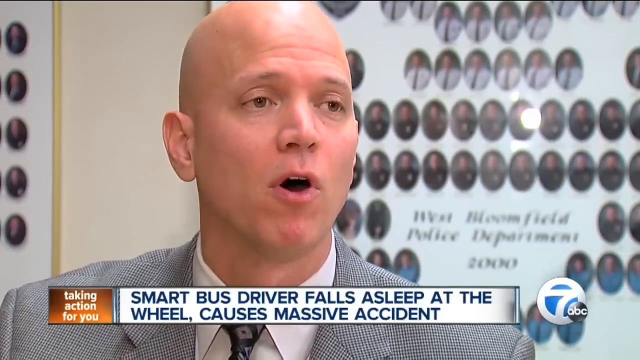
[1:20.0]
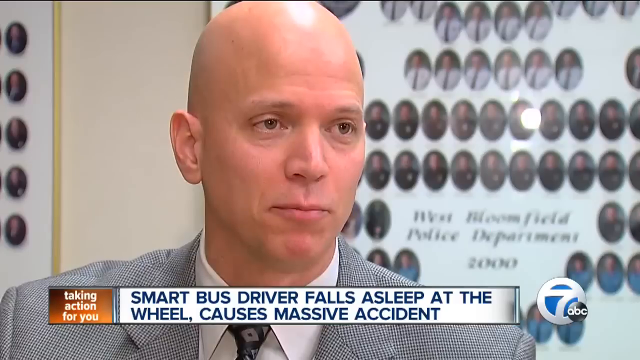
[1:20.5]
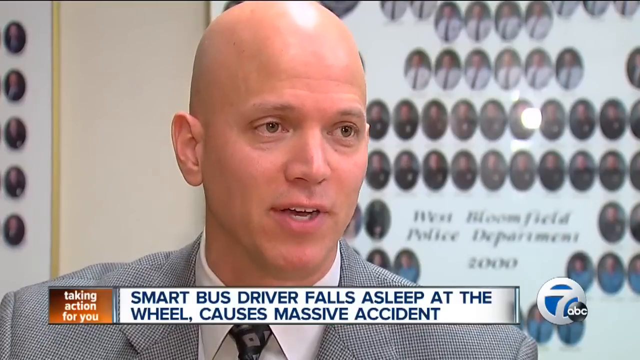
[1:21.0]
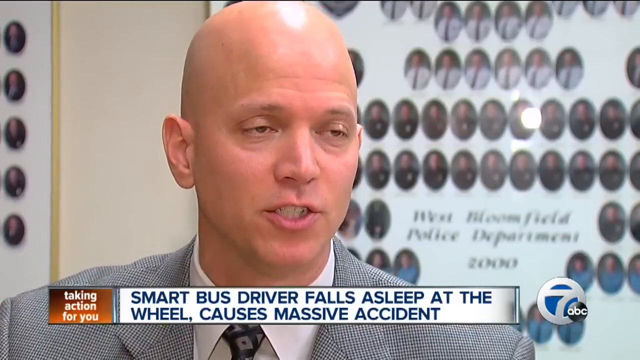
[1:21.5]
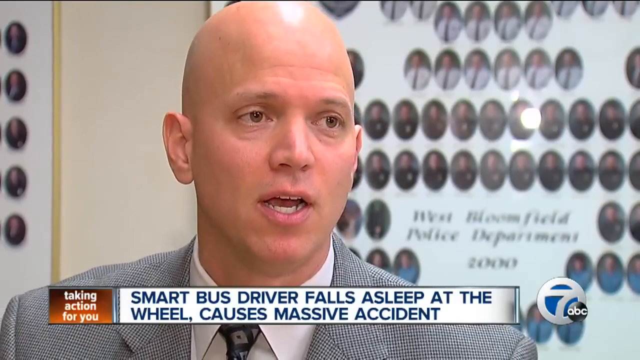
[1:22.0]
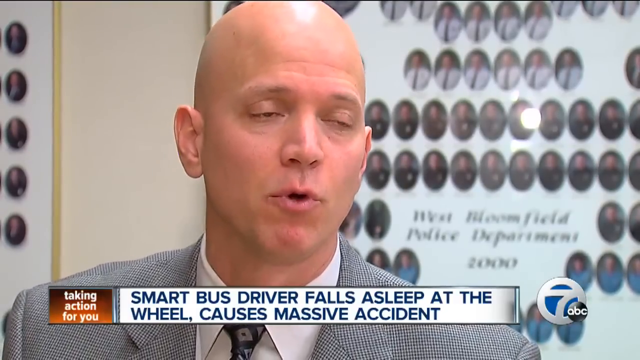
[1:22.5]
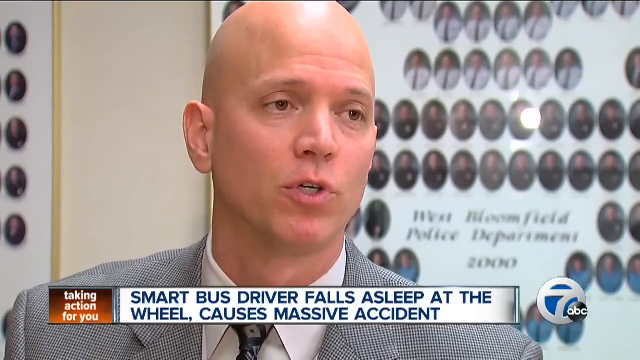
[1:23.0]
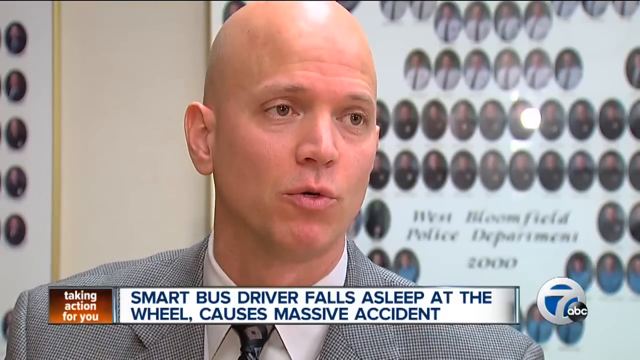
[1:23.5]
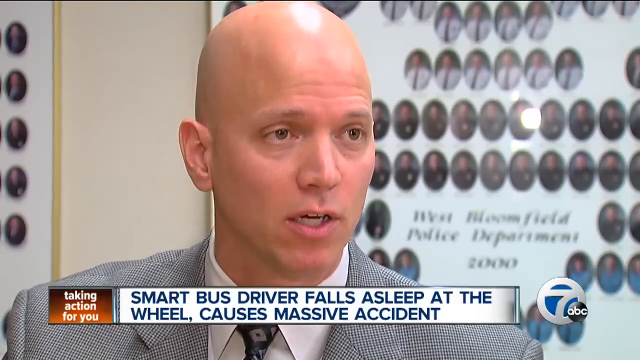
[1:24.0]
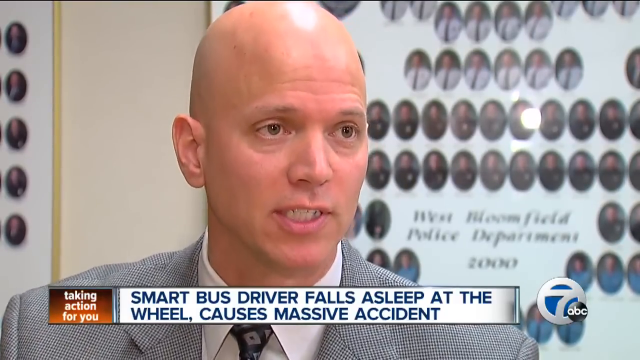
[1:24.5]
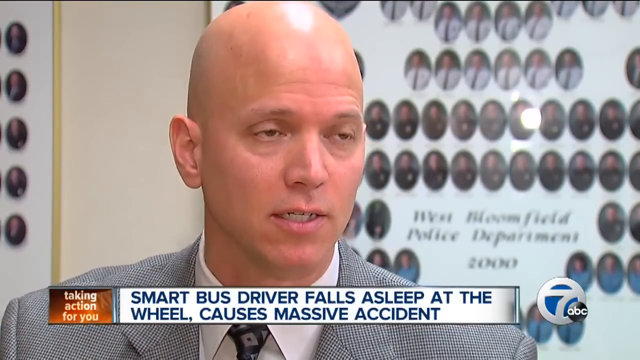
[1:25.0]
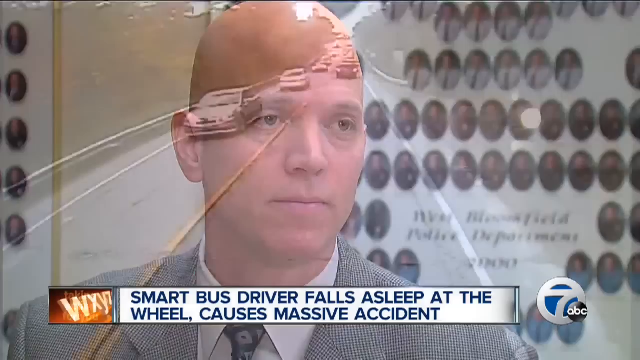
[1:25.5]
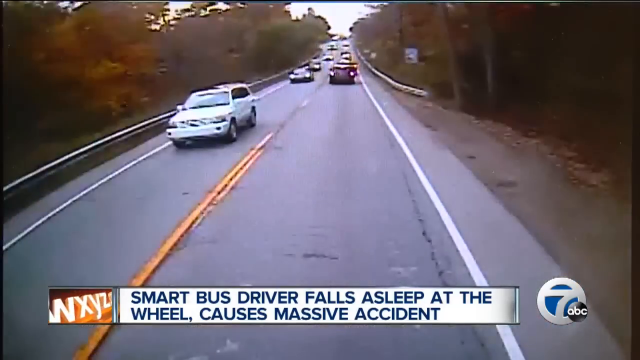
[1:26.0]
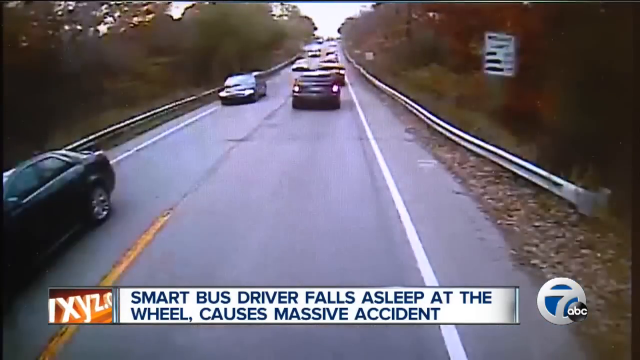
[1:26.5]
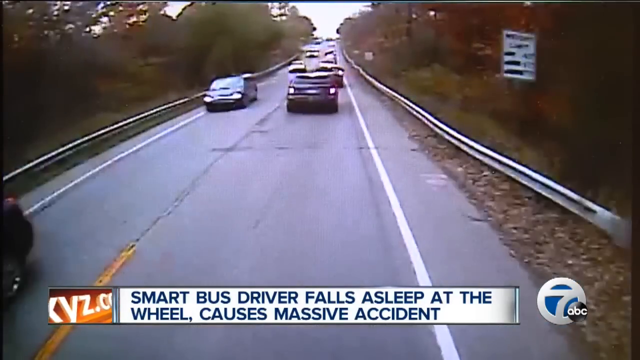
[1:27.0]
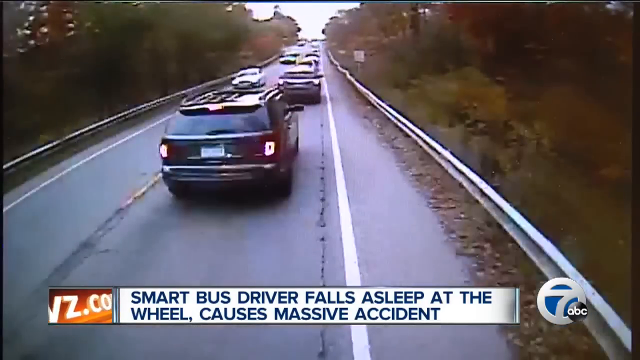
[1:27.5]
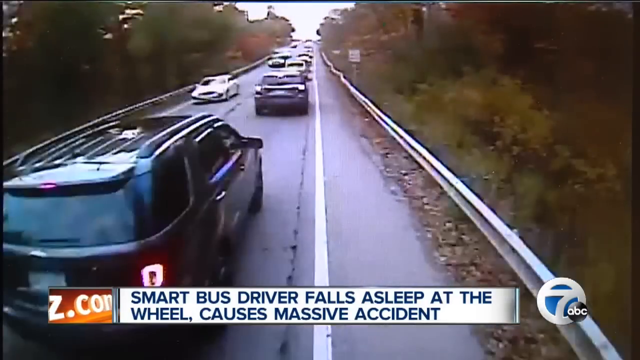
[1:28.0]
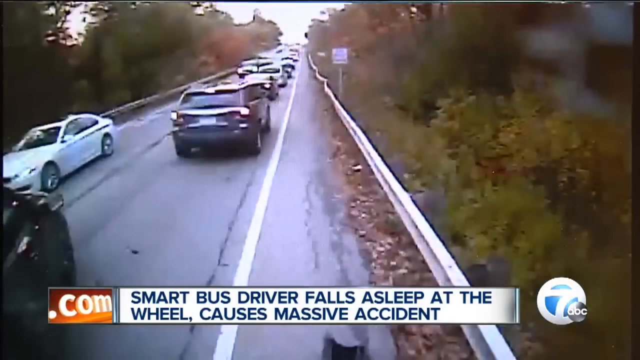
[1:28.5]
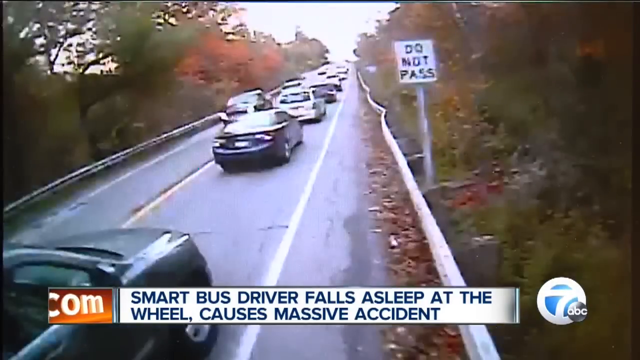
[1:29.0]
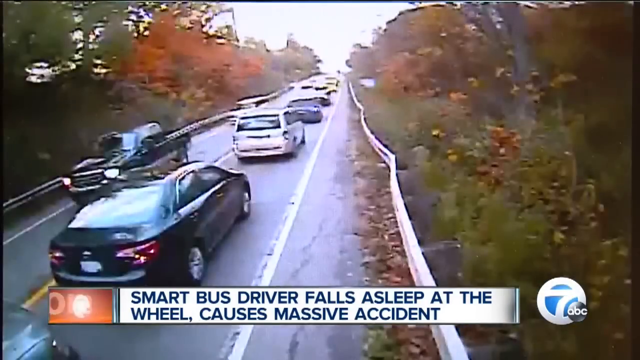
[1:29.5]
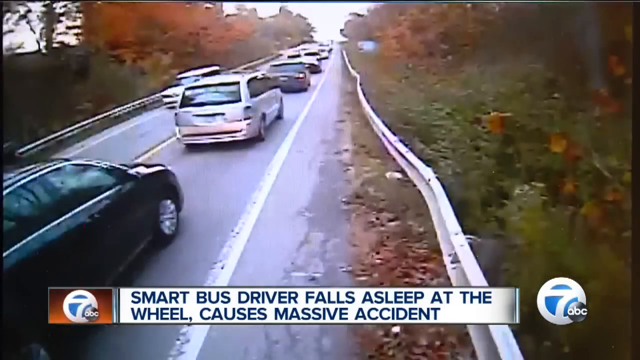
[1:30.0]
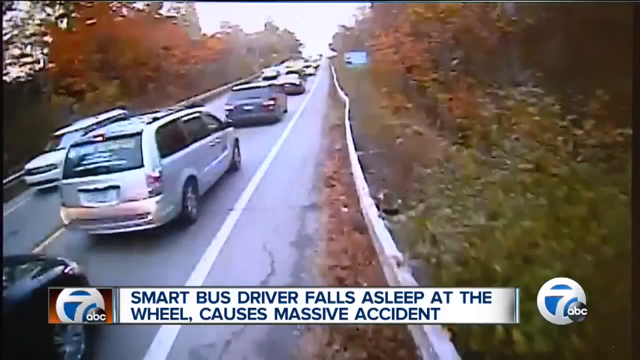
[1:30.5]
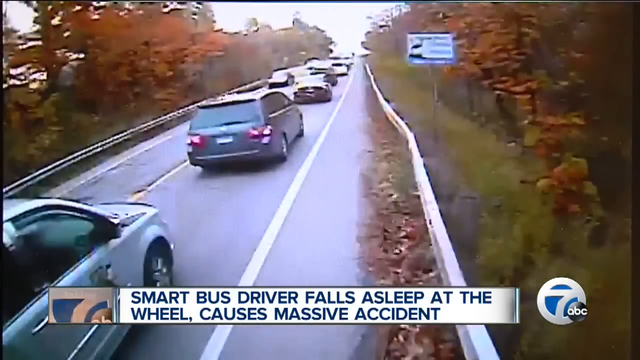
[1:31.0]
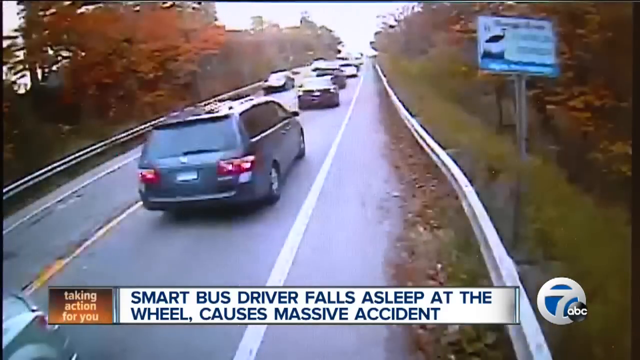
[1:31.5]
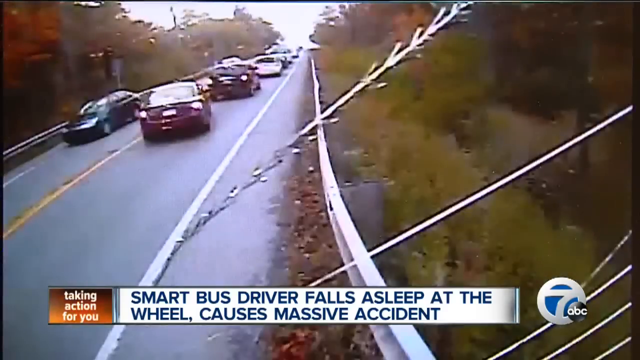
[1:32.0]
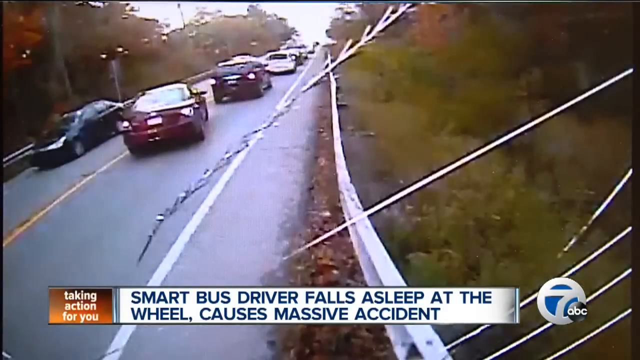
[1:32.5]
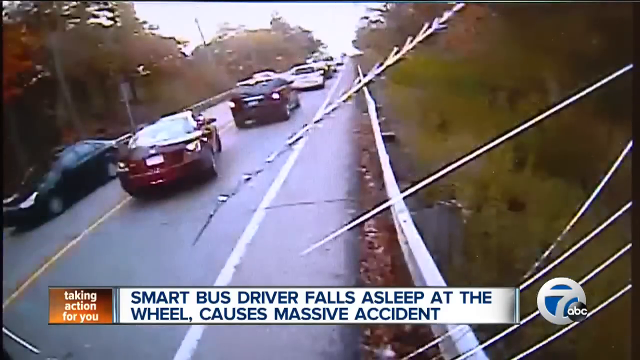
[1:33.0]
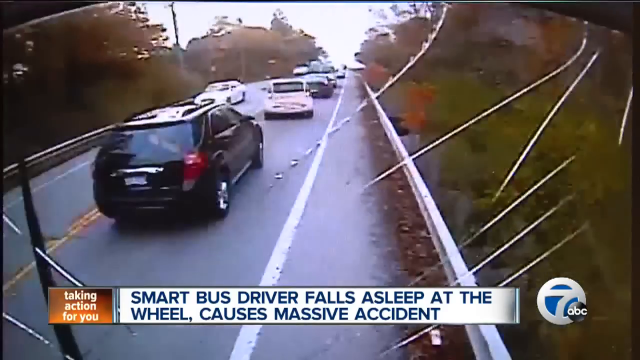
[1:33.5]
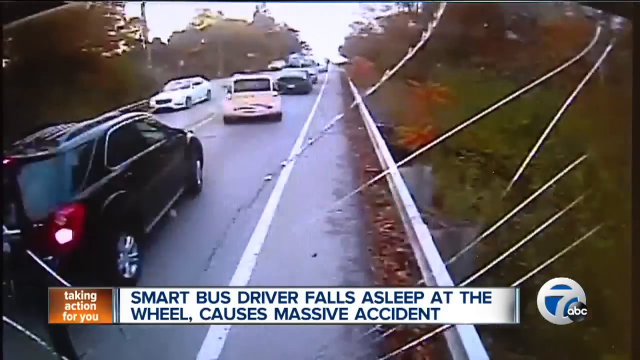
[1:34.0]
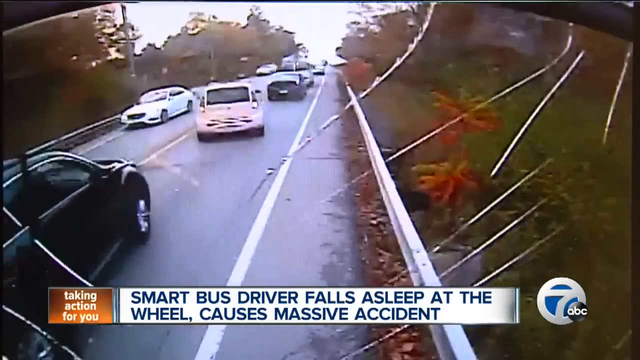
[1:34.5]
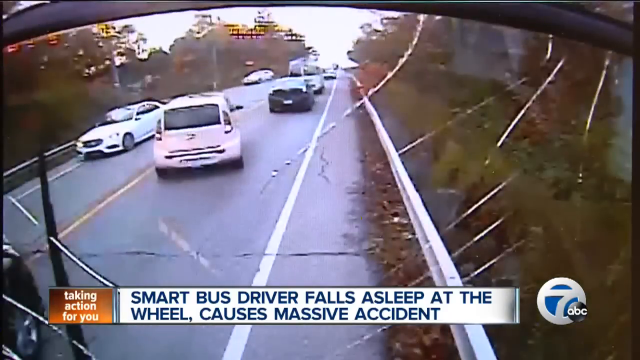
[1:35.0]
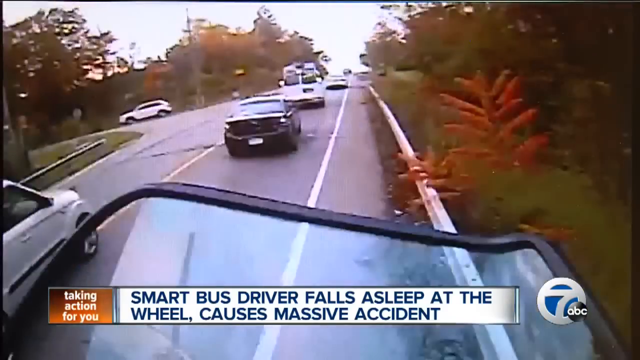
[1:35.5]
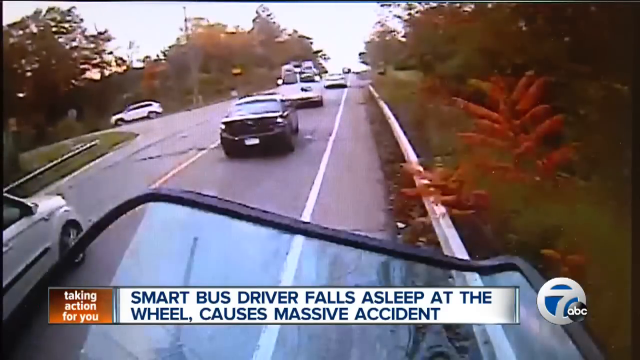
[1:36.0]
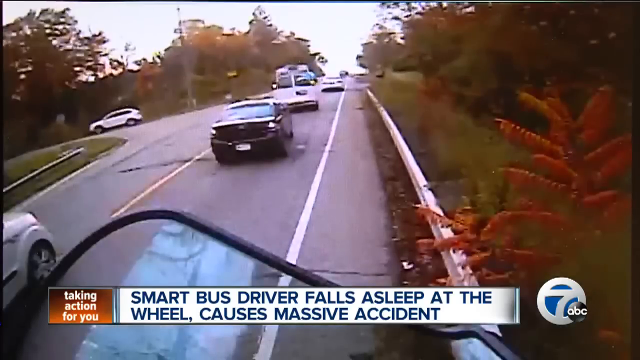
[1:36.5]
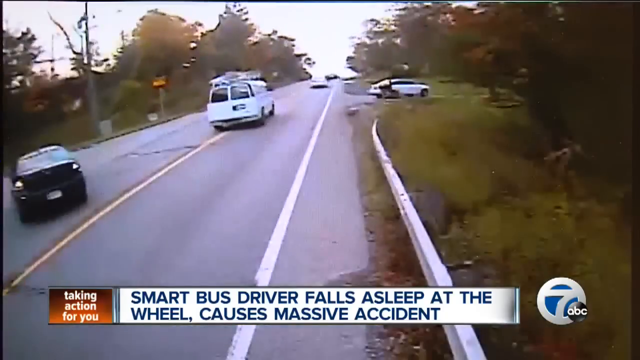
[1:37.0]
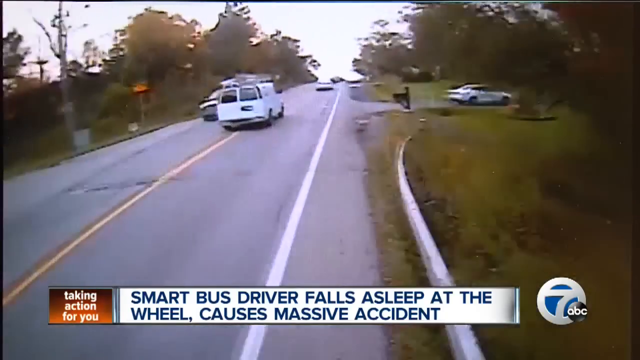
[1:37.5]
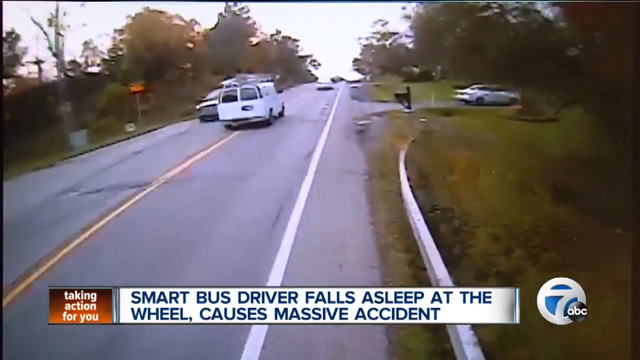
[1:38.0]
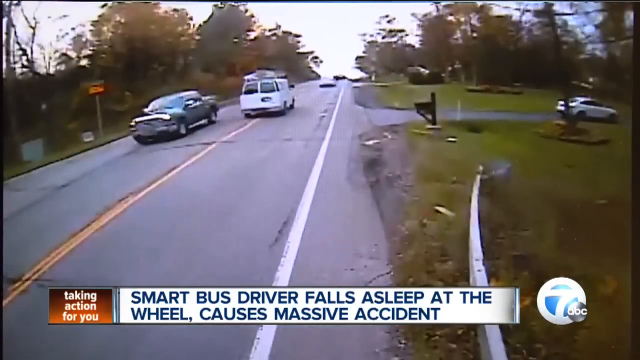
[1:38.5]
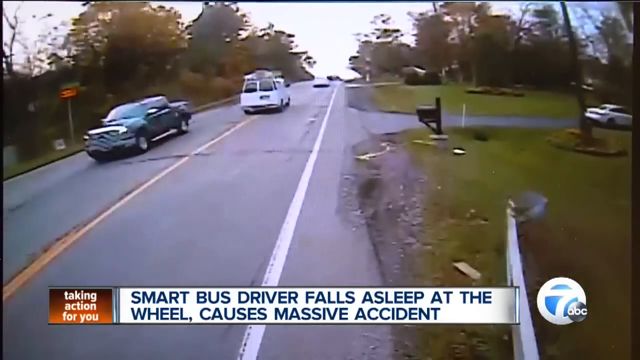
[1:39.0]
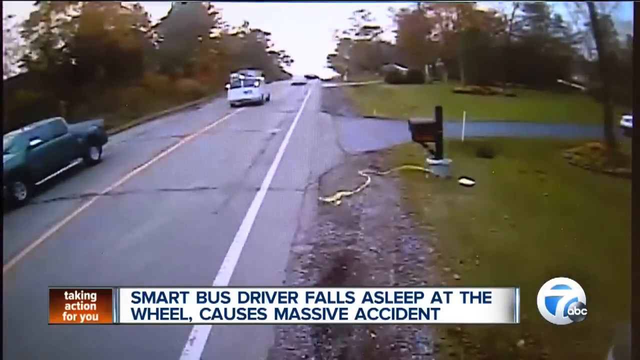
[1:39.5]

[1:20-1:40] The lieutenant continues talking on screen. Another view of the crash follows, apparently from the front of the bus, showing it moving forward on a two-lane road. The bus seems to crash into what looks like a black SUV, then goes to the side onto the railing and continues moving forward, its momentum apparently carrying on after the initial impact. A couple of cars appear to get out of the way, but multiple cars appear to have been impacted.